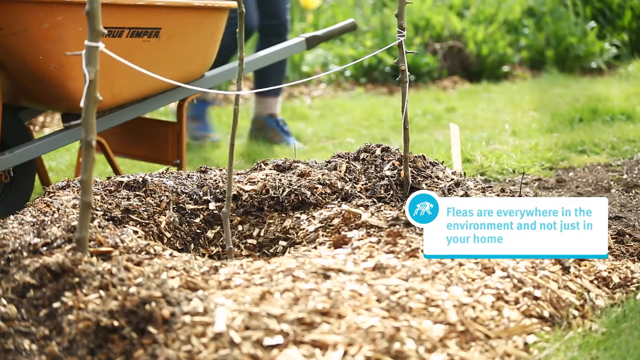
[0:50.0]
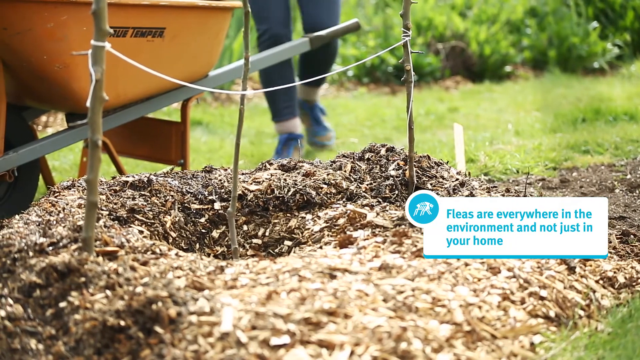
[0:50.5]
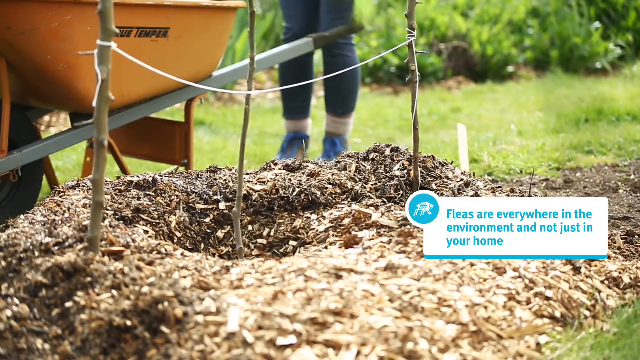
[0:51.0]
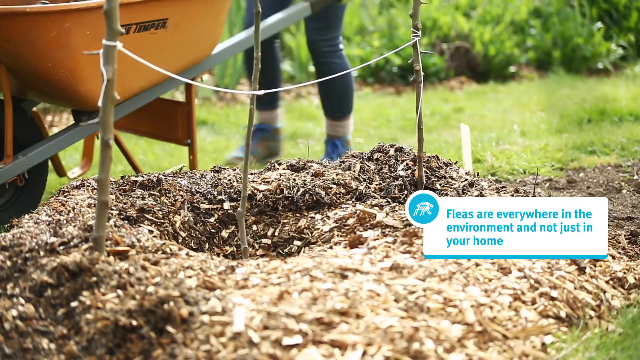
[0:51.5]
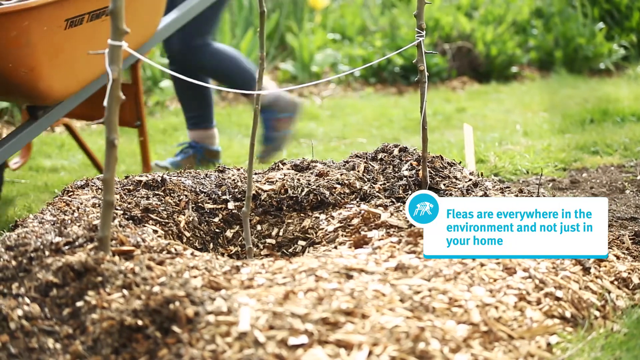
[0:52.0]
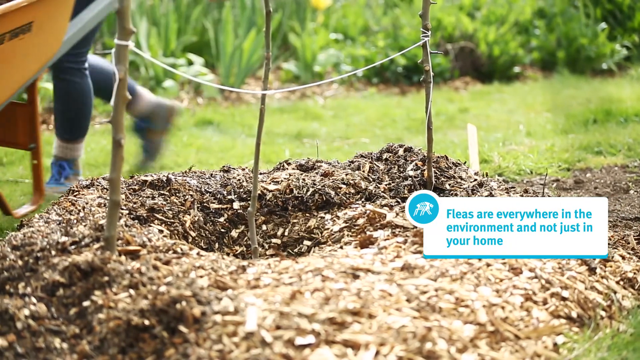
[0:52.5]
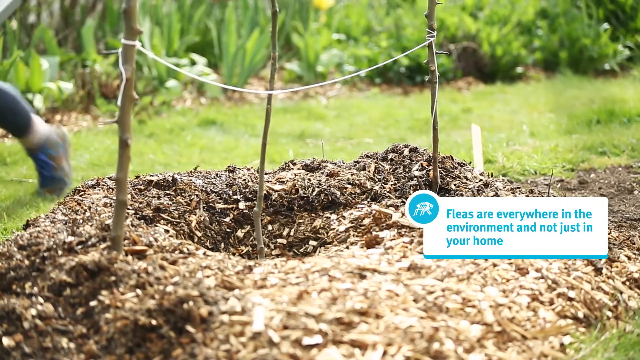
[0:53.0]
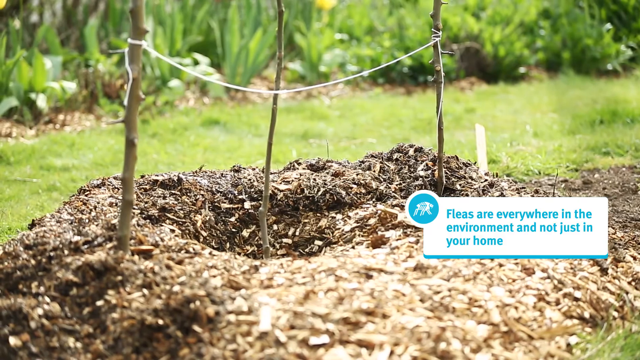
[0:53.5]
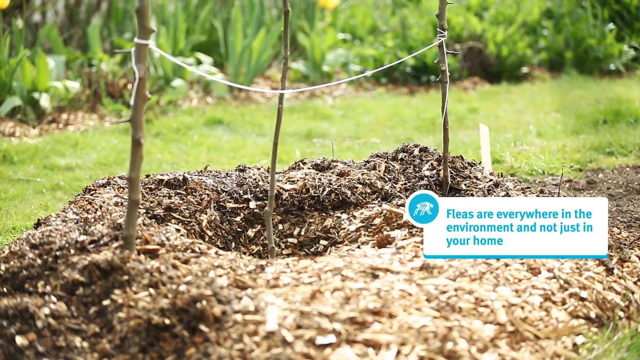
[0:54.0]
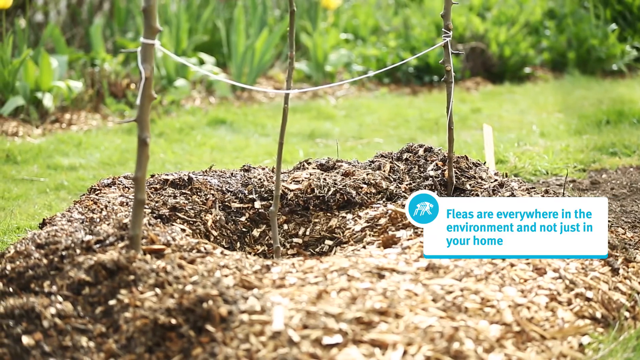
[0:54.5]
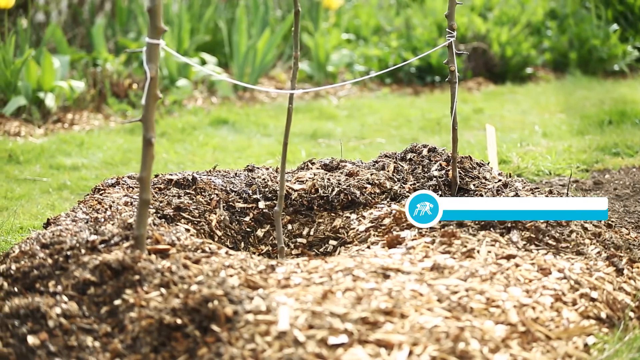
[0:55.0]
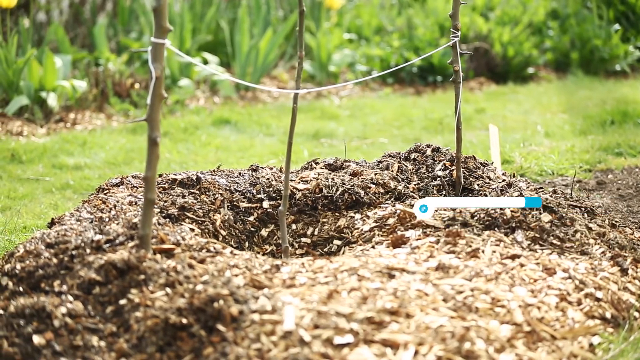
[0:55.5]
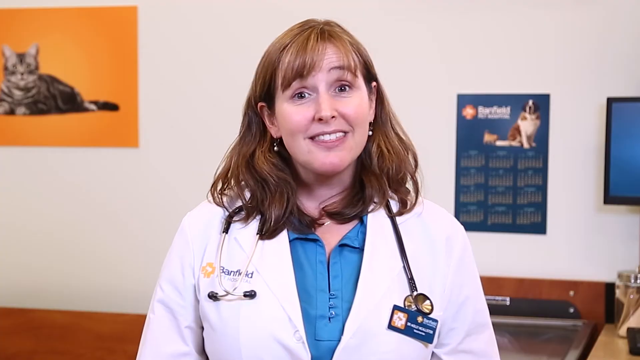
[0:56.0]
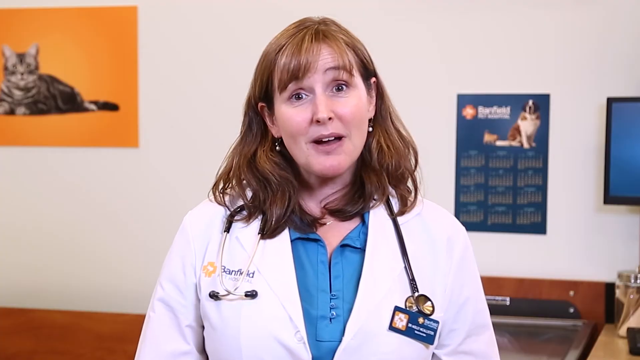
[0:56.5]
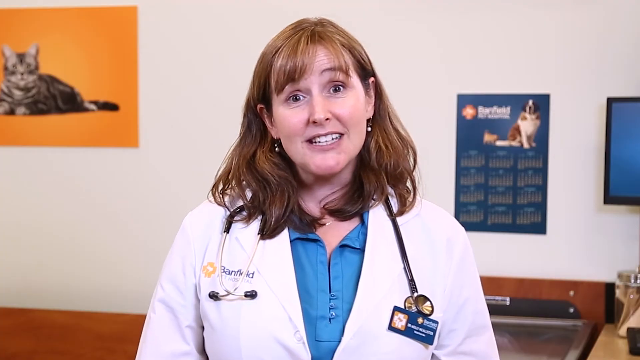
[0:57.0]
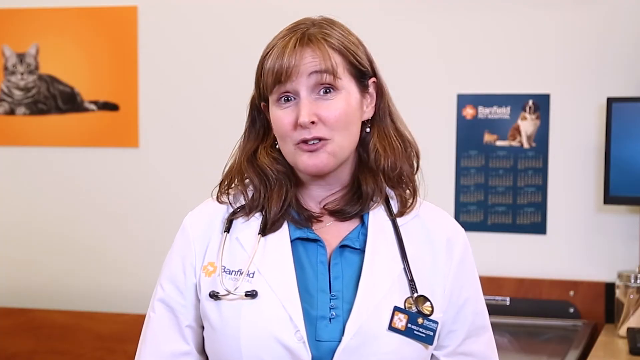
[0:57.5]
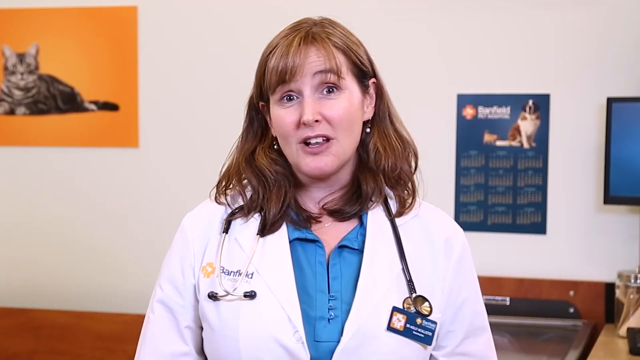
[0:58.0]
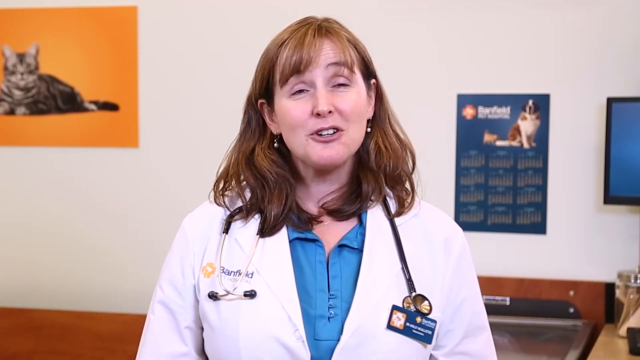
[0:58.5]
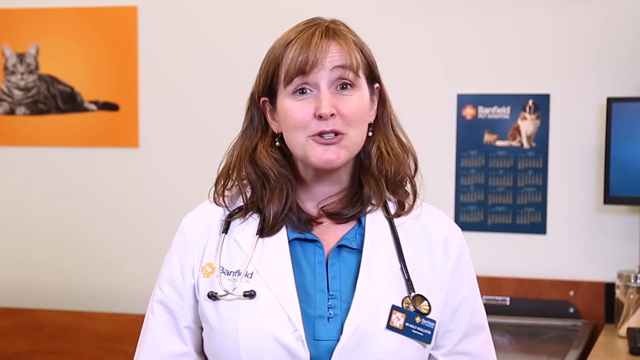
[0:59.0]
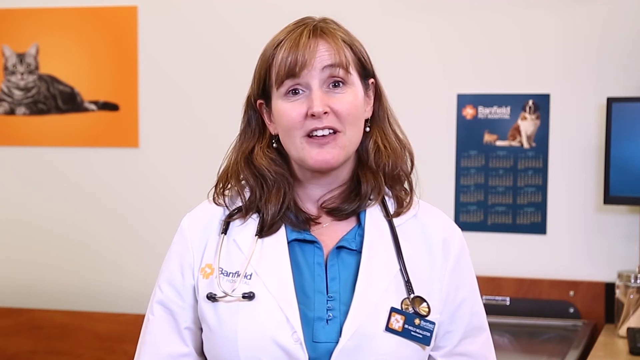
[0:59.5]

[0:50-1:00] A garden scene appears on screen, with planted trees and a pile of wood chips; a small piece of white cord runs between the trees. A yellow wheelbarrow is behind the garden scene. Text on the screen says "fleas are everywhere in the environment and not just in your home." Behind the scene, a person in grayish tennis shoes and black pants is standing in a grassy yard; they pick up the wheelbarrow and walk off with it across the yard. The video then cuts to the veterinarian again talking to the camera.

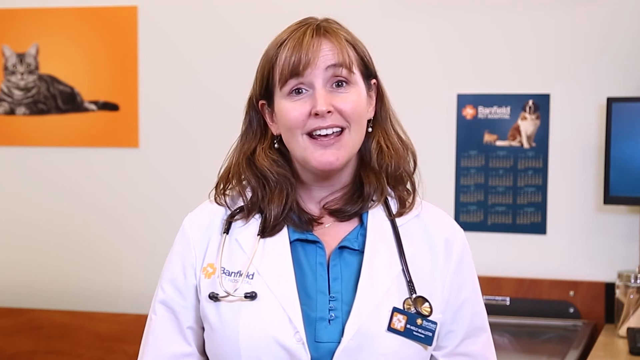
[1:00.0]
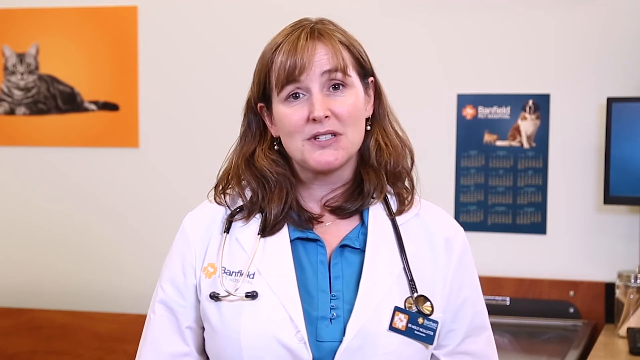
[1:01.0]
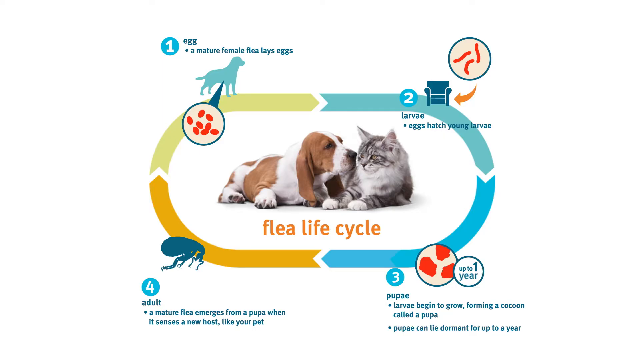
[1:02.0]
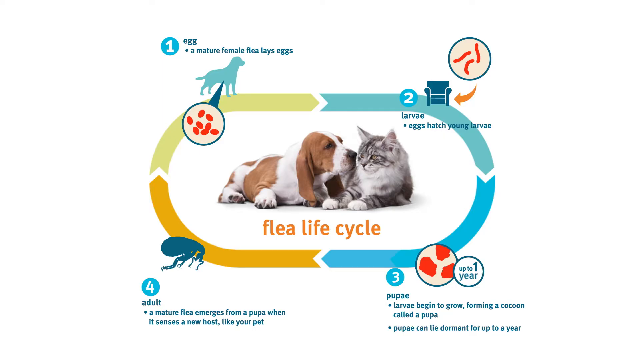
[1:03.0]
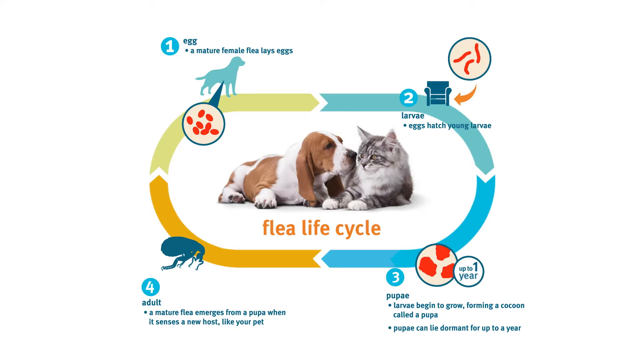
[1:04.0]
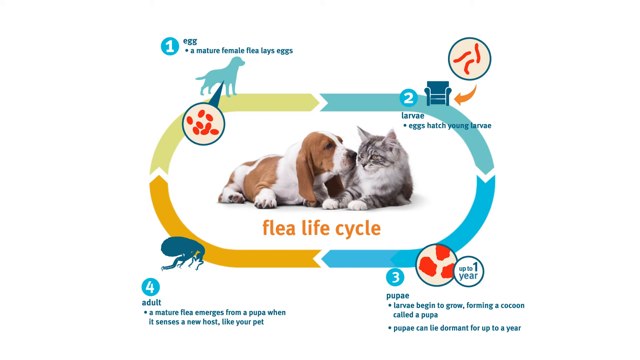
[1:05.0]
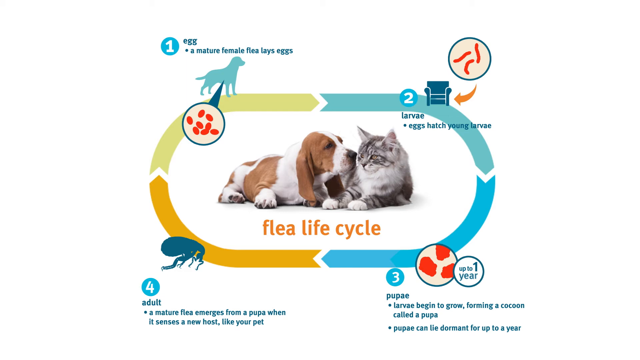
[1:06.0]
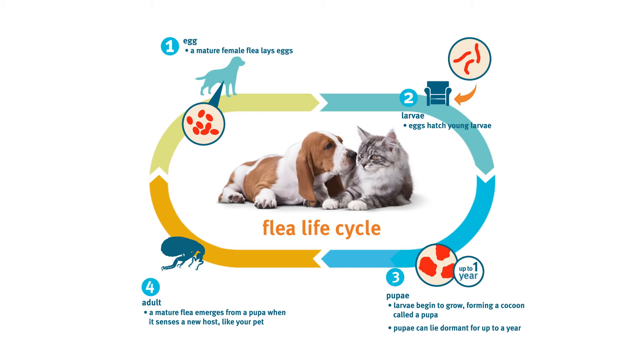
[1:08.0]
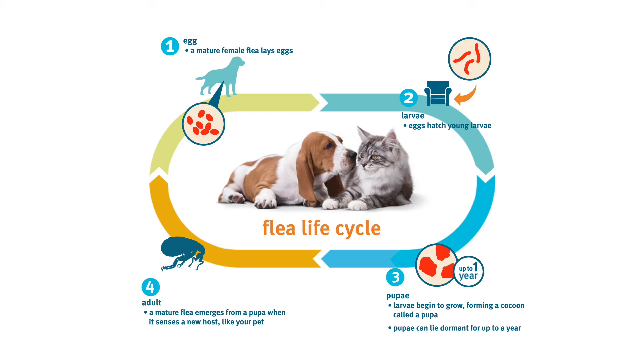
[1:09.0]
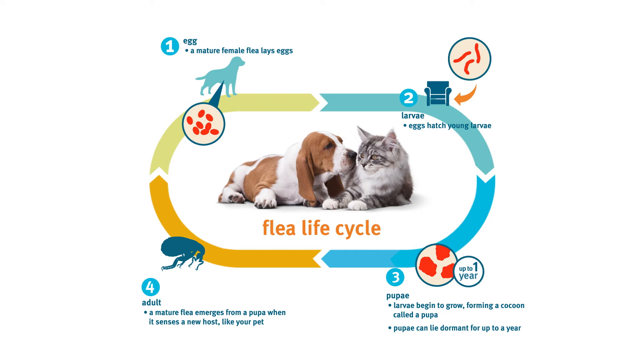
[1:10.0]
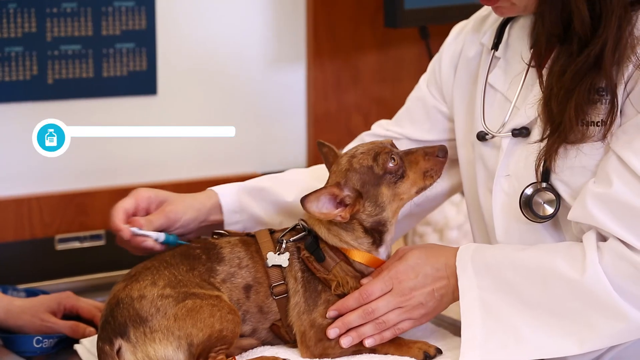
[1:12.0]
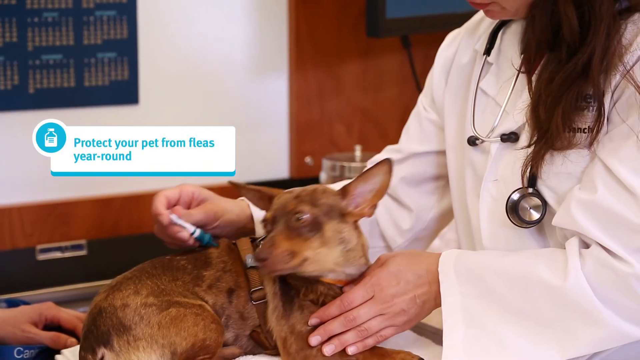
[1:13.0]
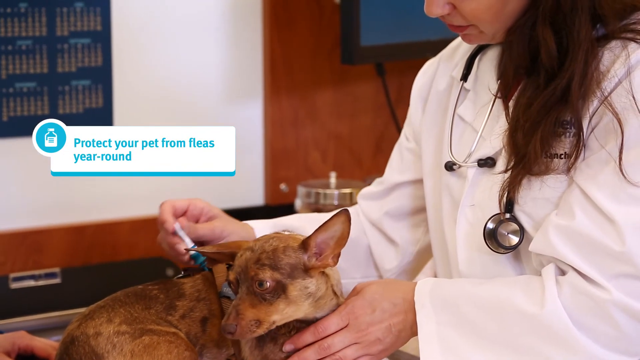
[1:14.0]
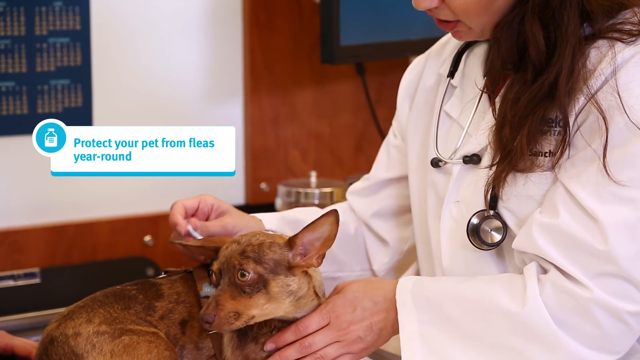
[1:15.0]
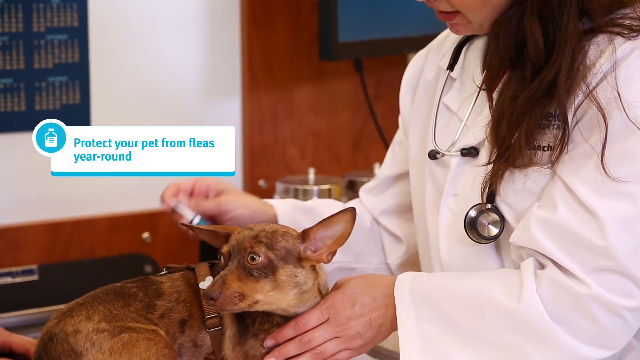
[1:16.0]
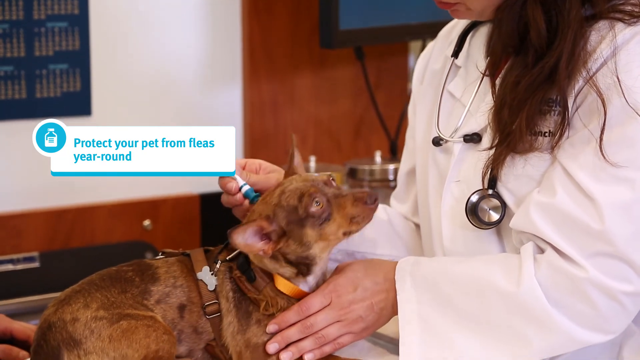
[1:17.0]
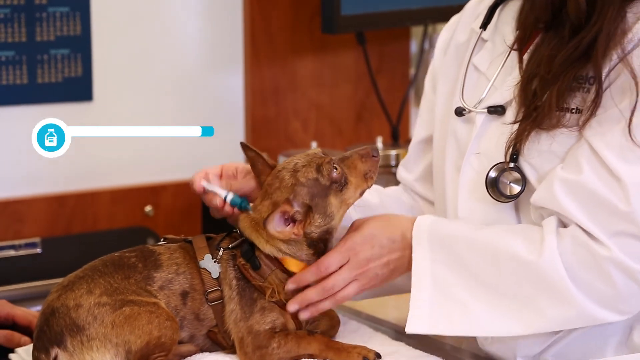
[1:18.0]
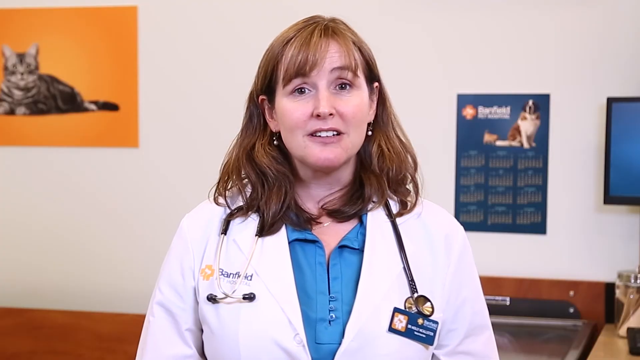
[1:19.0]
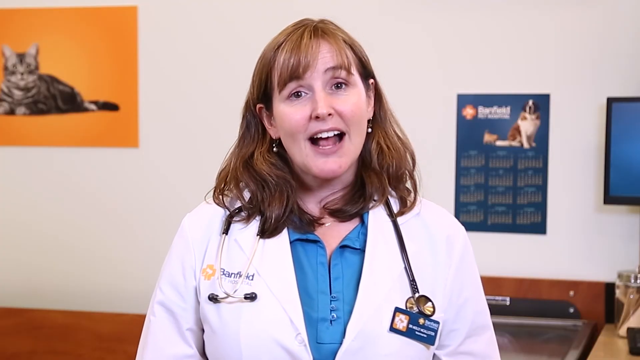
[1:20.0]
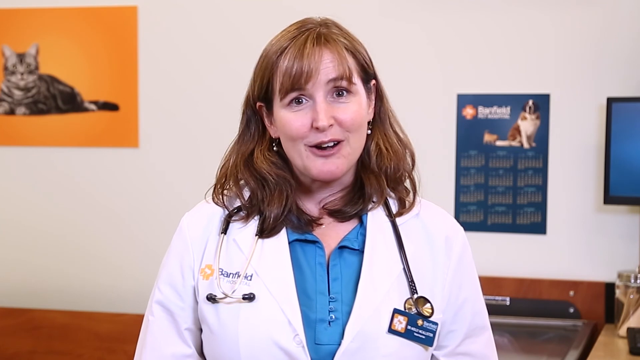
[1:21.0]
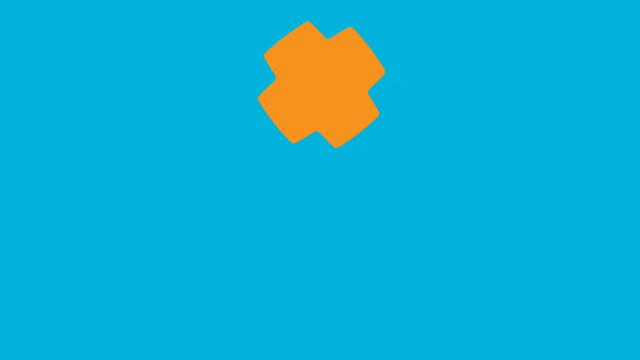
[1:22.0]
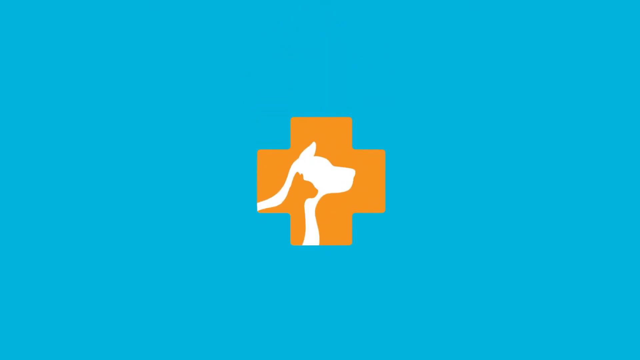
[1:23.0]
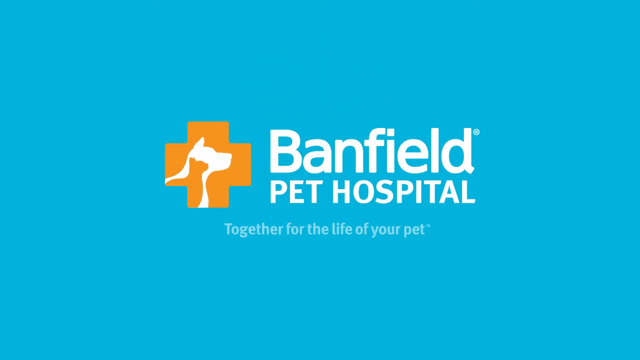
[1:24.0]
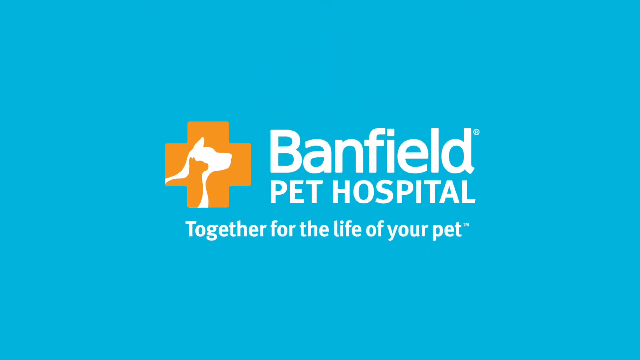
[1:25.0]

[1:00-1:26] The veterinarian is sitting, and then a circular graphic titled "the flea life cycle" in orange text is shown, with different colors for different portions of the cycle and a brown and white dog and a gray and white cat in the middle of the circle. The cycle appears to consist of steps. Step one, "egg," shows a light green or green image of a dog with a microscopic view of flea eggs and the text "egg, a mature female flea lays eggs." Step two says "larva, eggs hatch young larva," with a blue chair and a microscopic-type view of red larvae pointing to the chair. Step three in the circle is "pupae," with the text "Larvae begin to grow, forming a cocoon called a pupa."